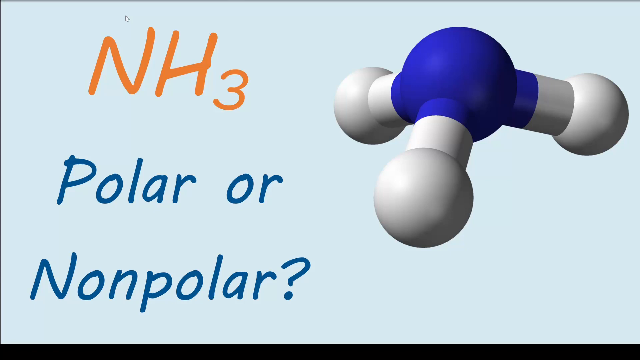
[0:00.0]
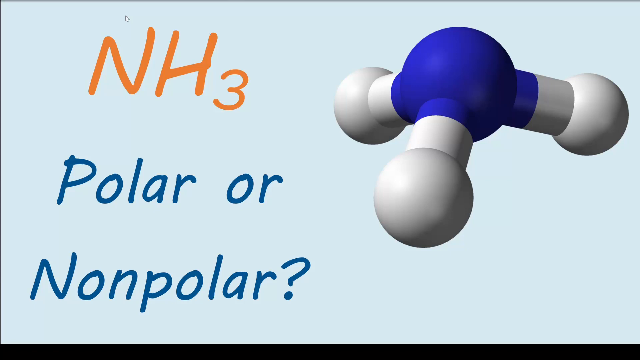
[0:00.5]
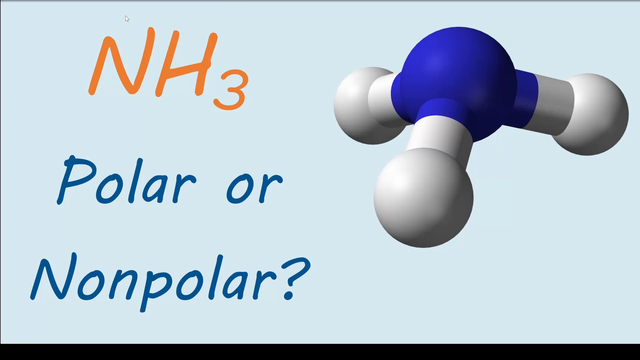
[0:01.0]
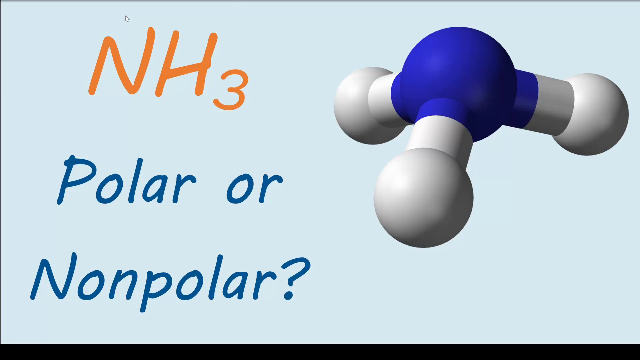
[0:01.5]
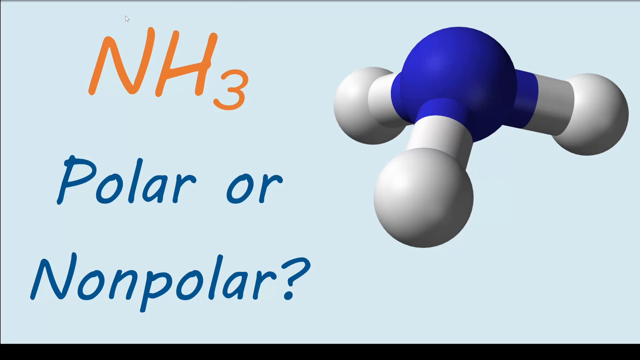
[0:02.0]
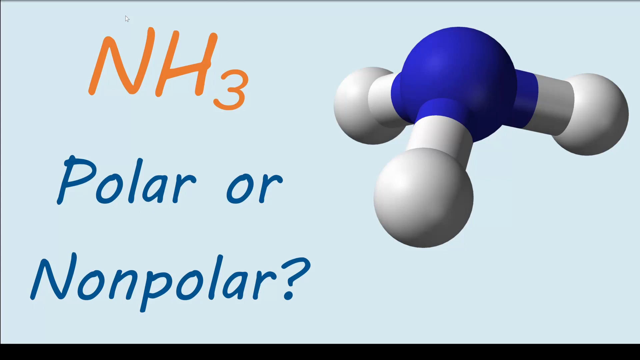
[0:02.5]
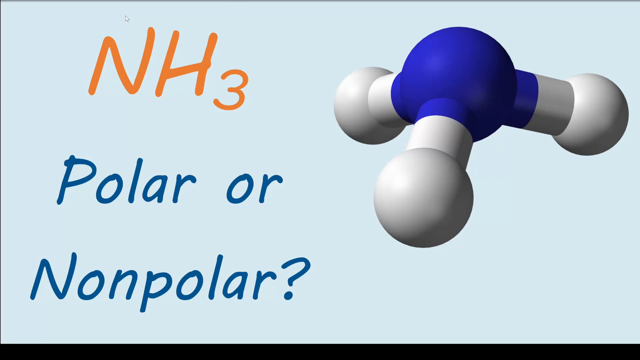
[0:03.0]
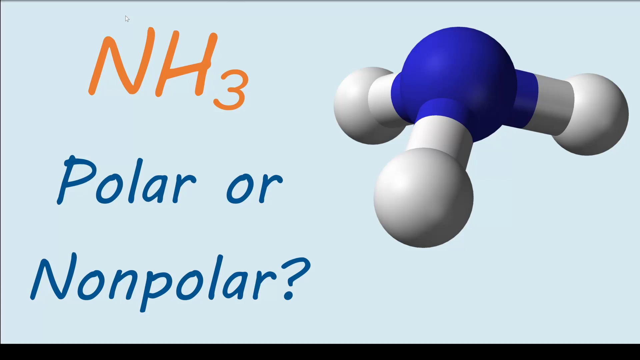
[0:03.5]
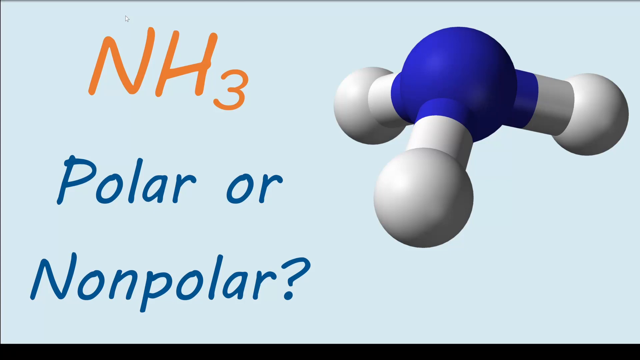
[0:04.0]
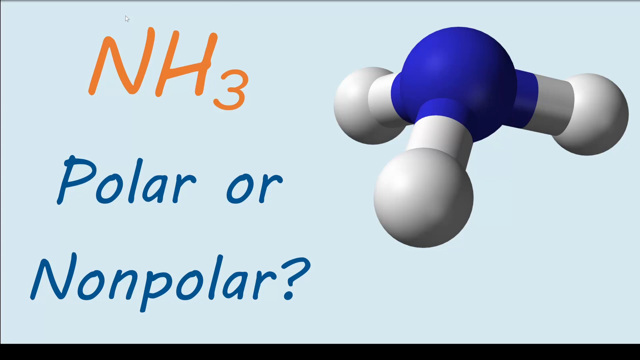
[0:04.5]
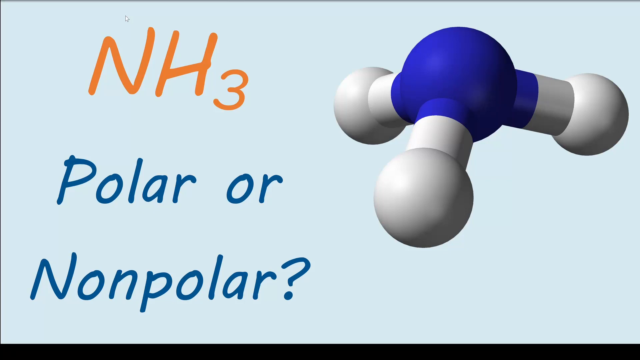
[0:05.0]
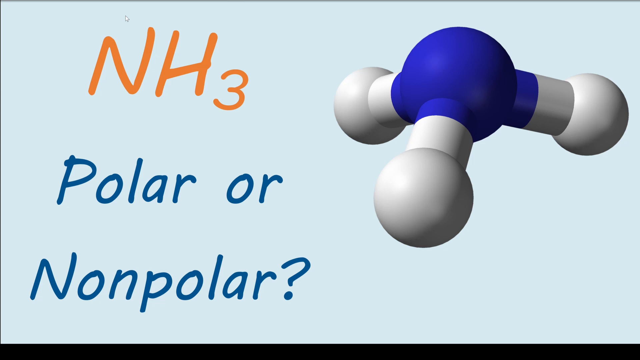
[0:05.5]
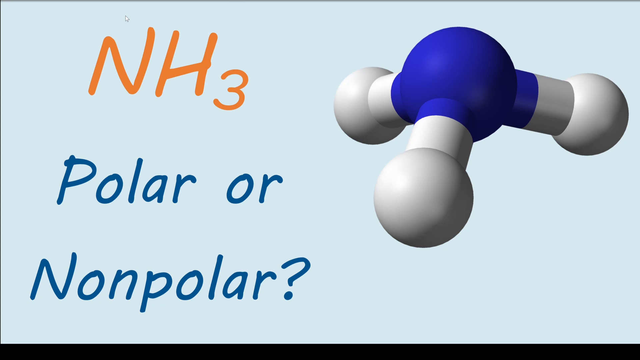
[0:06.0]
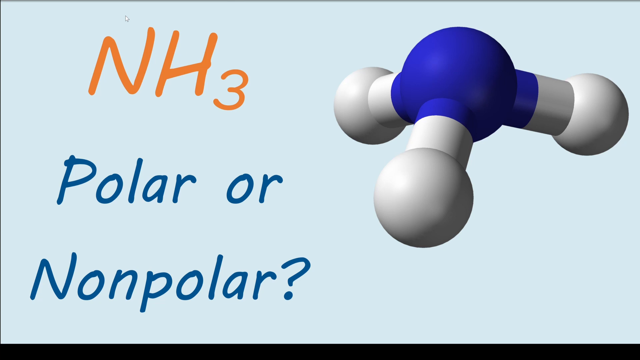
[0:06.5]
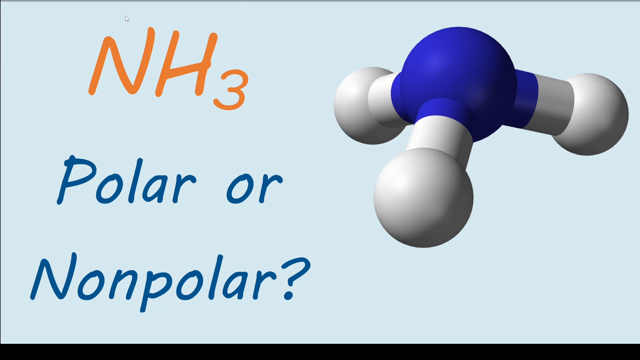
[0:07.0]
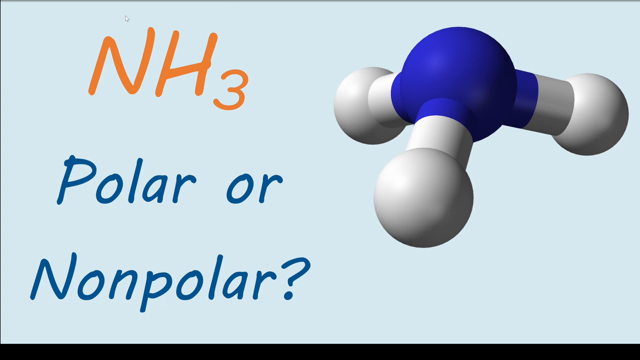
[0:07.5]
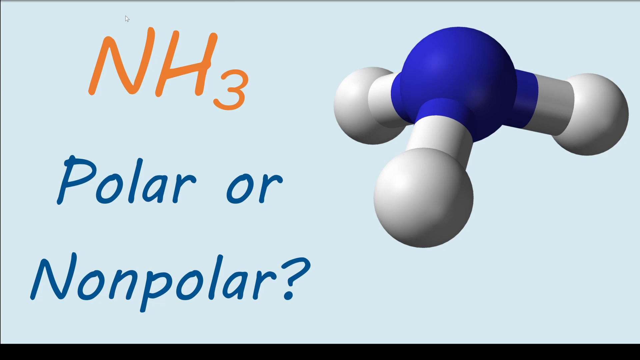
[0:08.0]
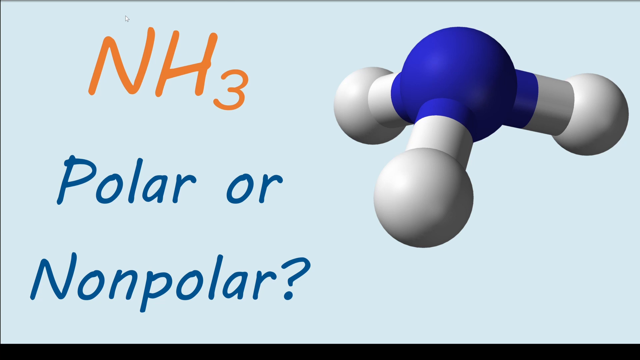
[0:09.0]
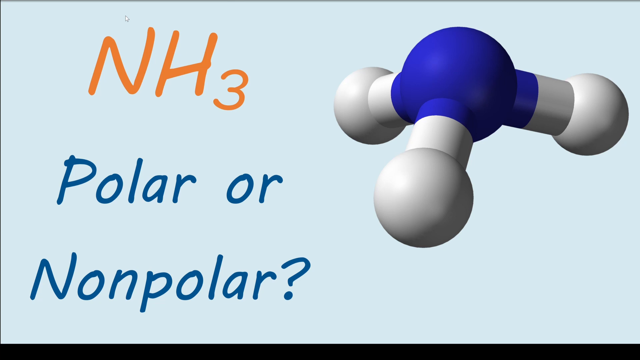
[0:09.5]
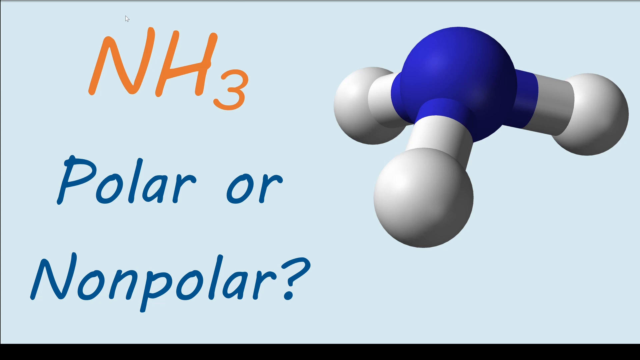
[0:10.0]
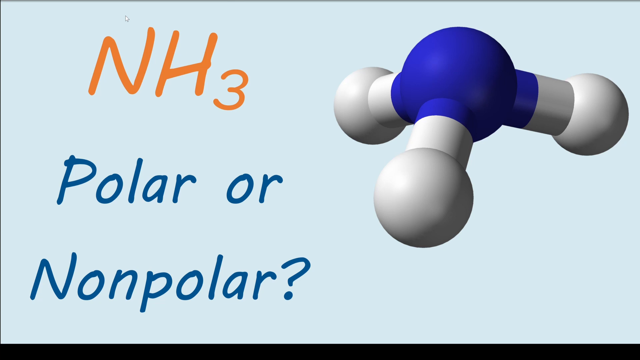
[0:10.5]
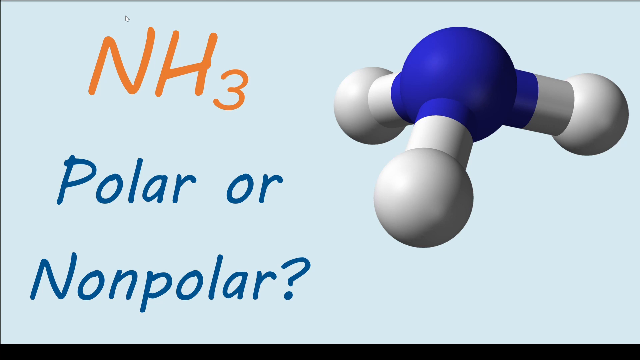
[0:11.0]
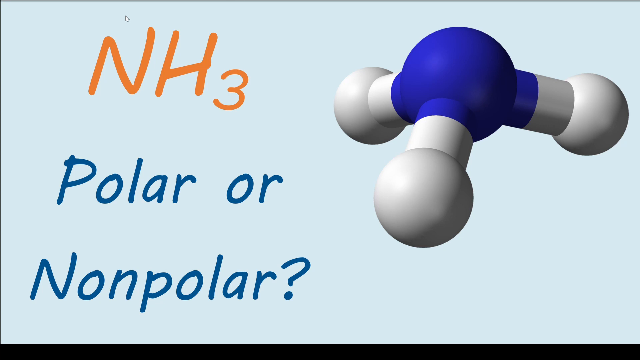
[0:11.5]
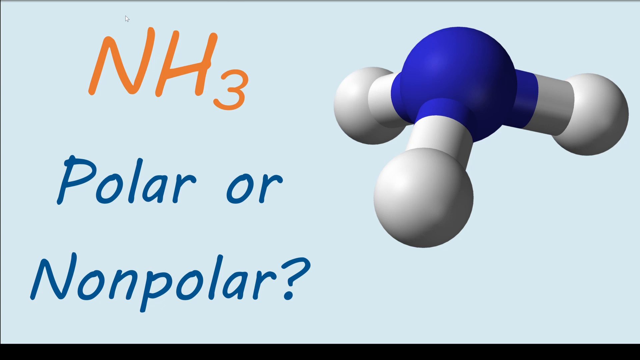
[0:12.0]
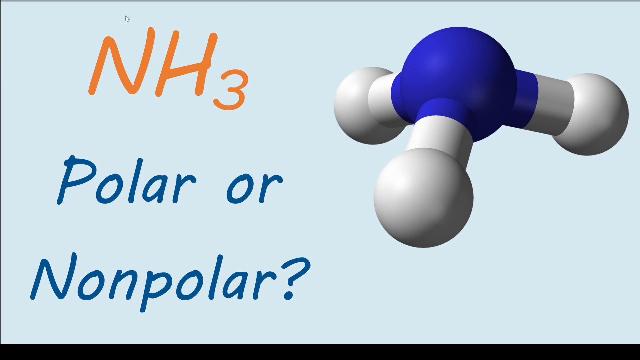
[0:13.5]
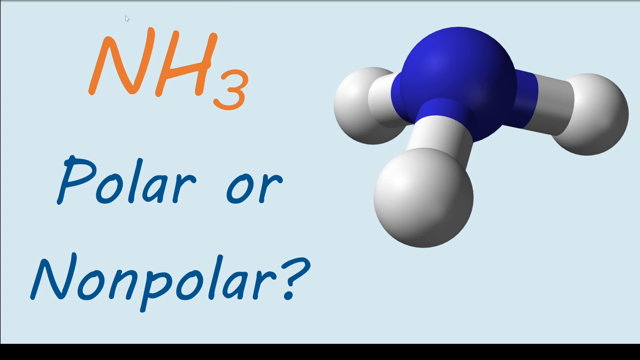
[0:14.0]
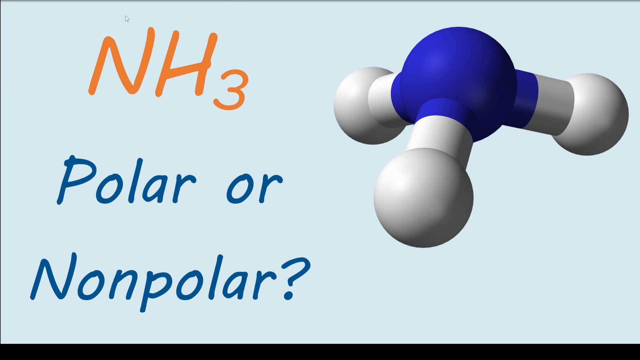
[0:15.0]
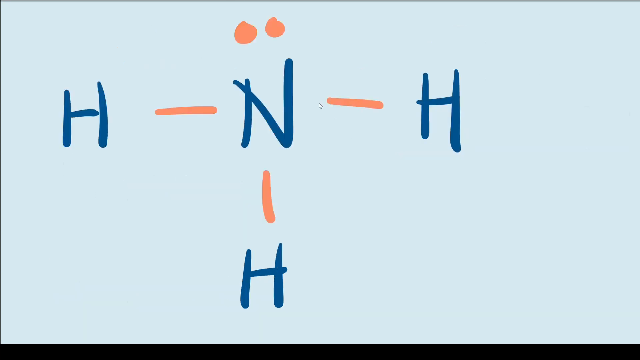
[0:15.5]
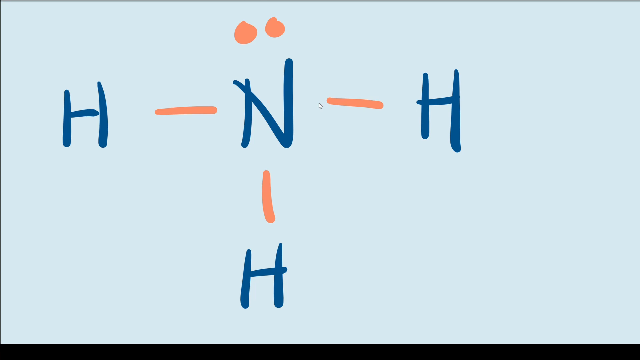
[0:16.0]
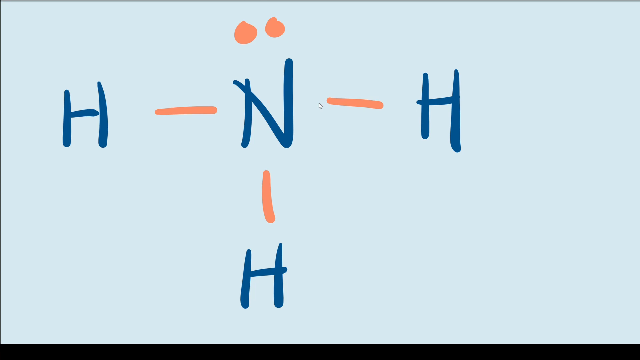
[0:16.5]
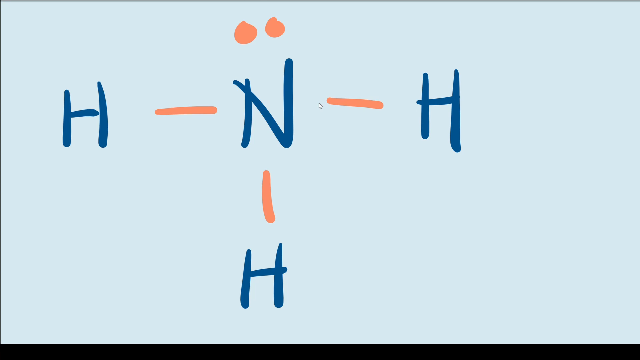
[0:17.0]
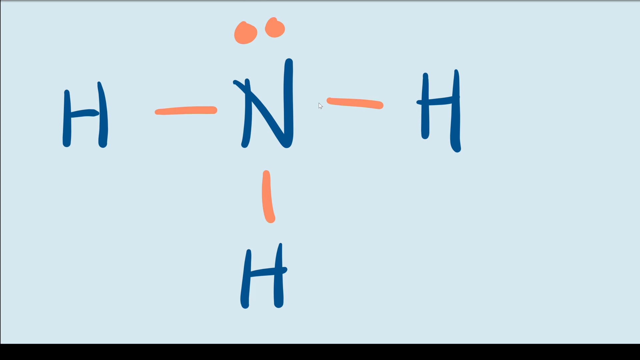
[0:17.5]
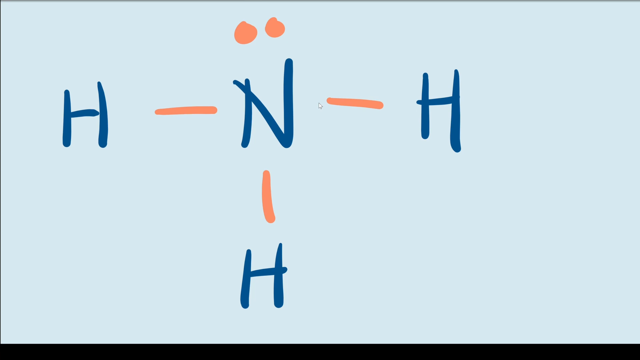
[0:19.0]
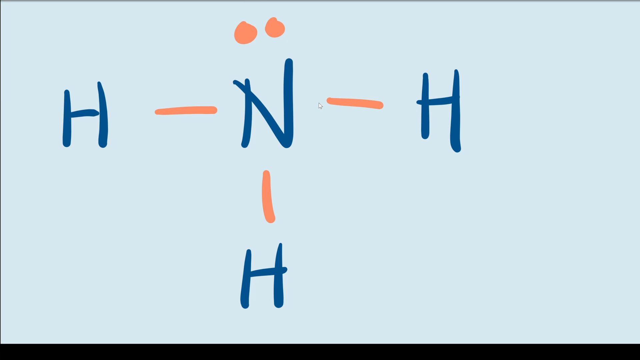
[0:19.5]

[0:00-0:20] The video apparently opens on a PowerPoint slideshow slide reading "NH3 polar or nonpolar" with a picture of a chemistry molecule. The slide does not advance for the first few seconds. It then advances to what seems to be a molecule diagram, still in slide format: an N in the center of the page with three H's in blue type connected to it, one H on either side and one below, joined by orange lines. Two orange dots are above the N.